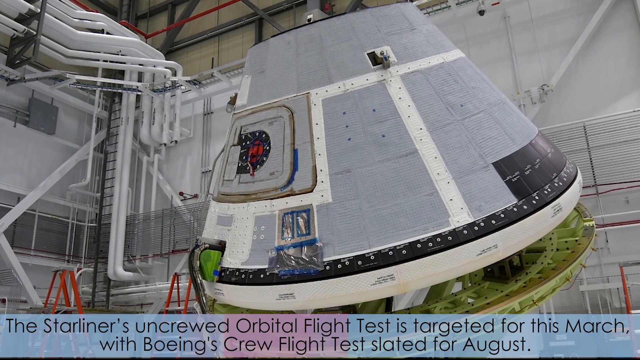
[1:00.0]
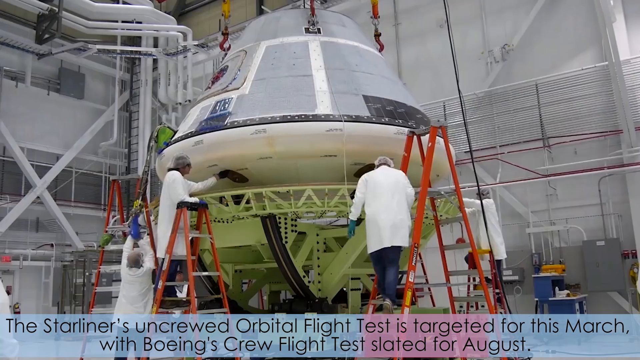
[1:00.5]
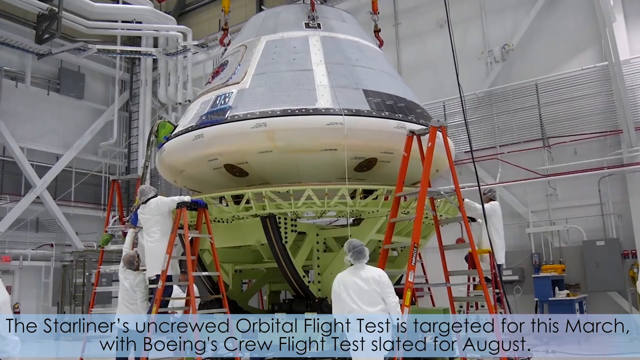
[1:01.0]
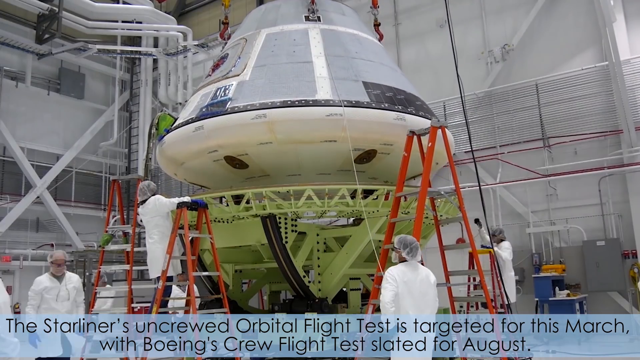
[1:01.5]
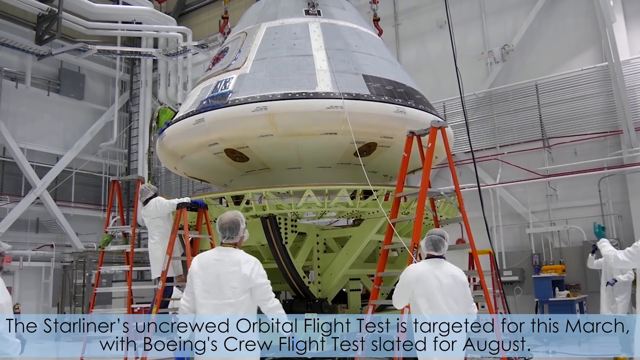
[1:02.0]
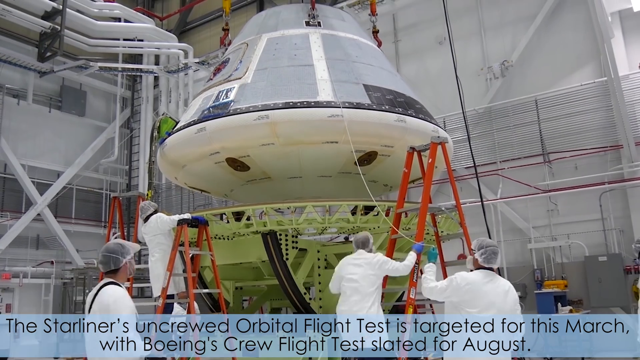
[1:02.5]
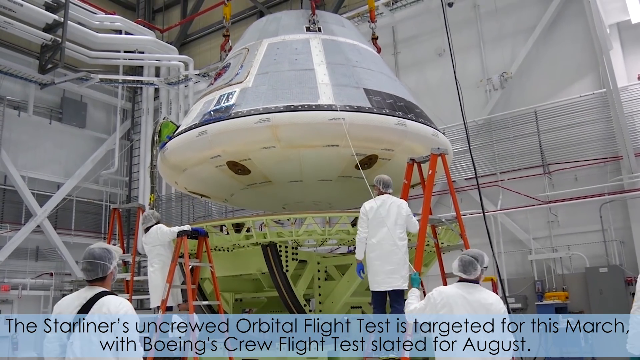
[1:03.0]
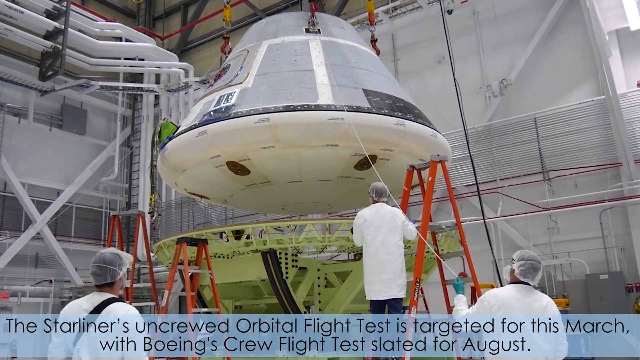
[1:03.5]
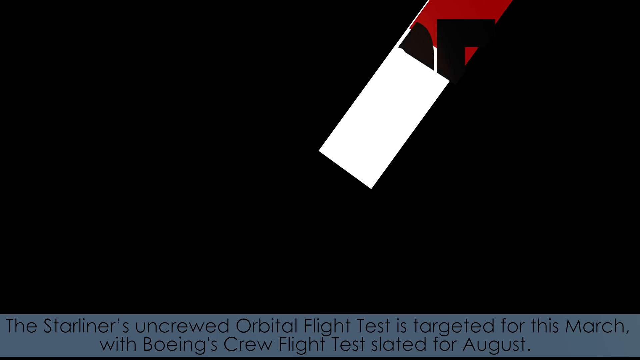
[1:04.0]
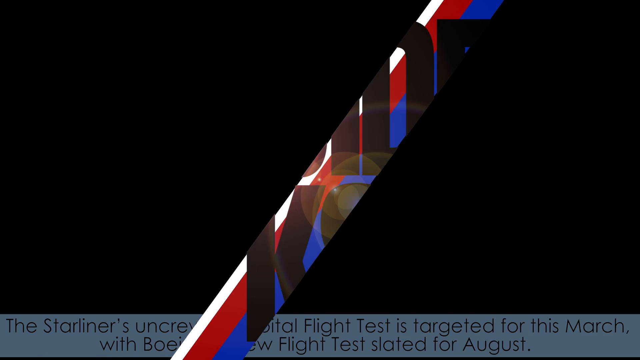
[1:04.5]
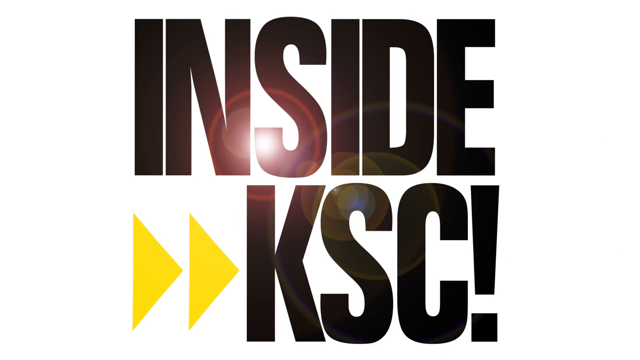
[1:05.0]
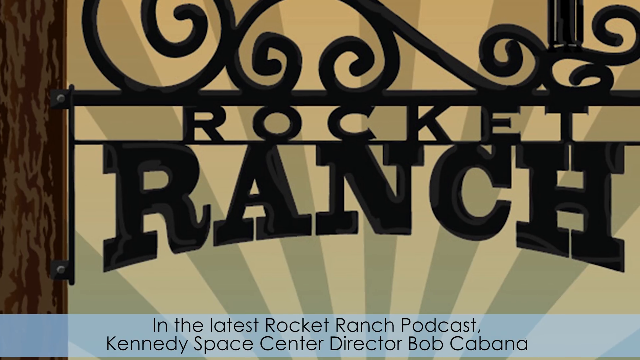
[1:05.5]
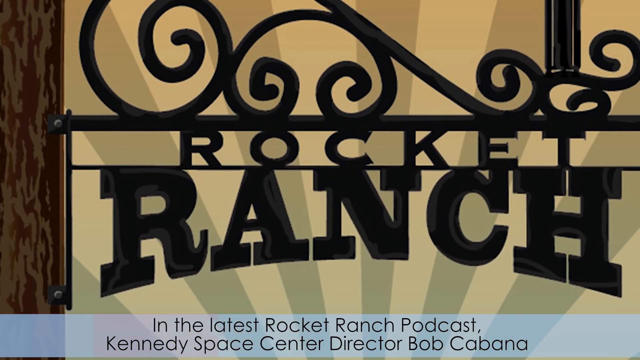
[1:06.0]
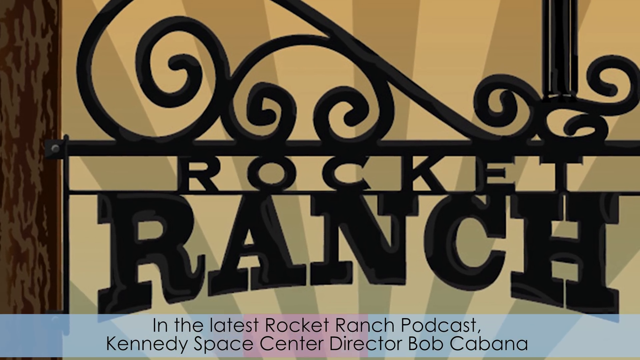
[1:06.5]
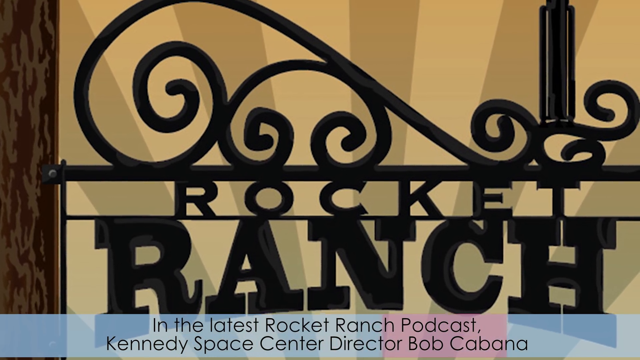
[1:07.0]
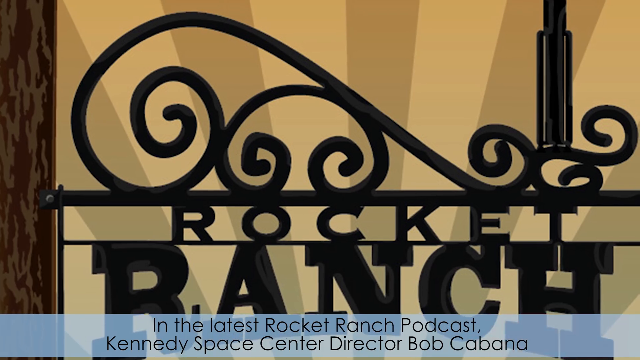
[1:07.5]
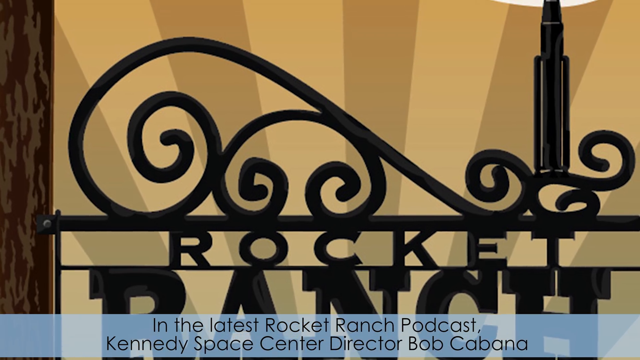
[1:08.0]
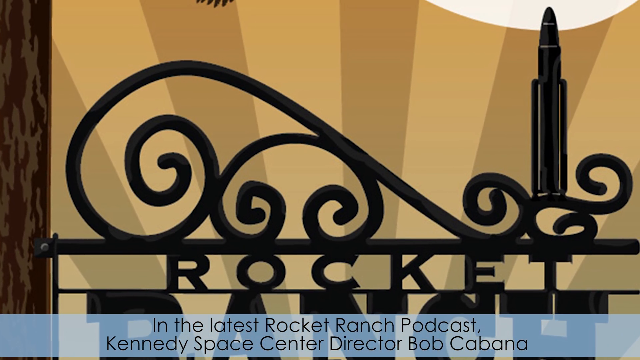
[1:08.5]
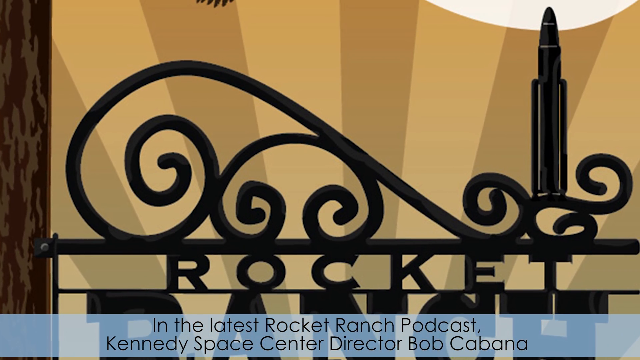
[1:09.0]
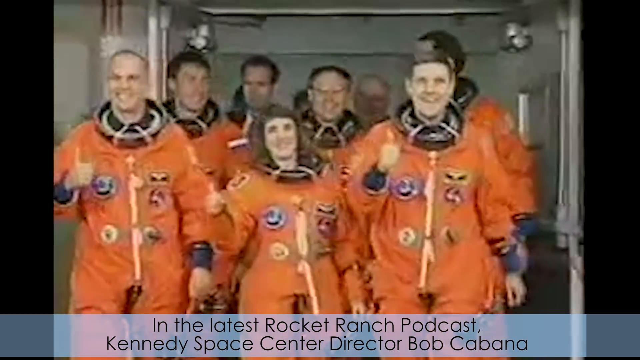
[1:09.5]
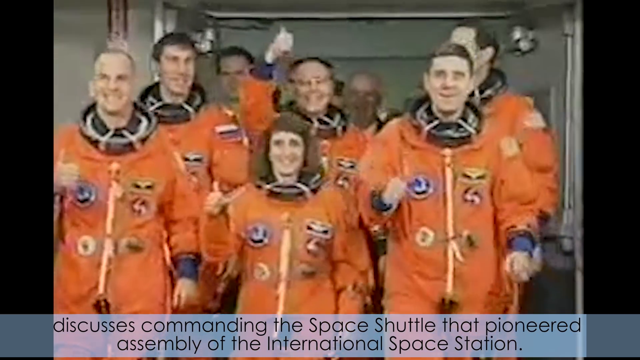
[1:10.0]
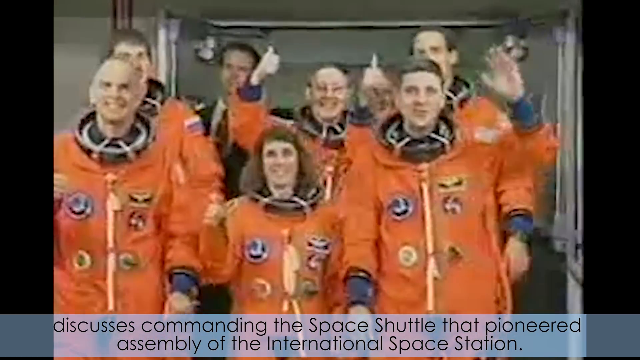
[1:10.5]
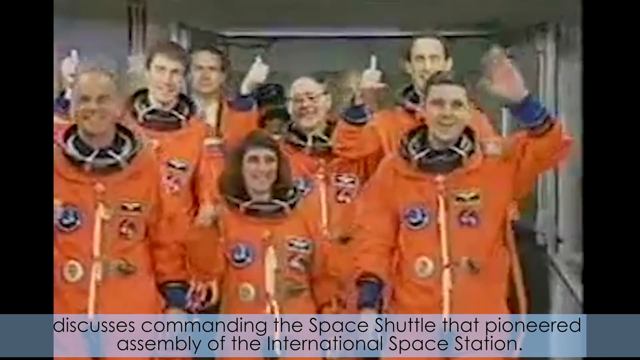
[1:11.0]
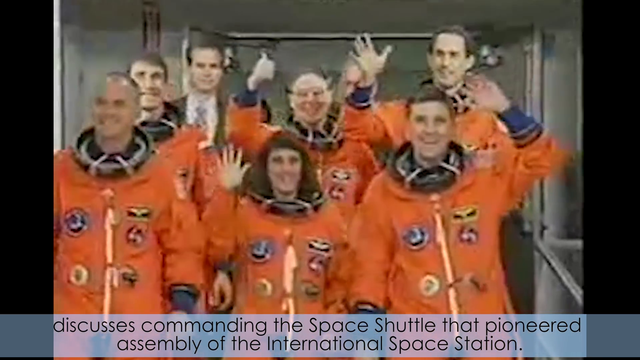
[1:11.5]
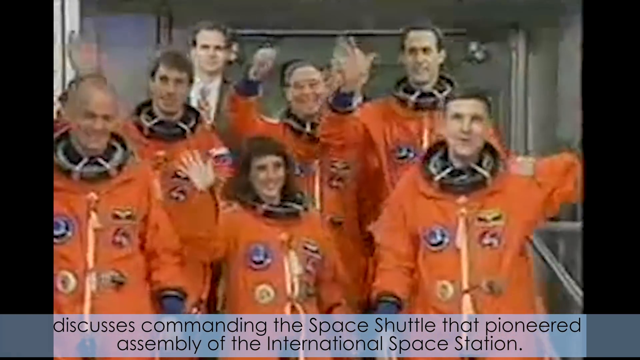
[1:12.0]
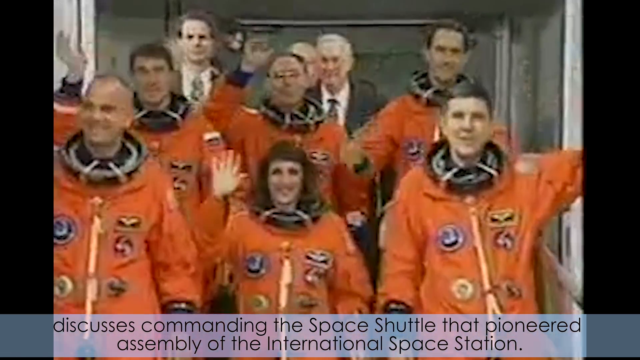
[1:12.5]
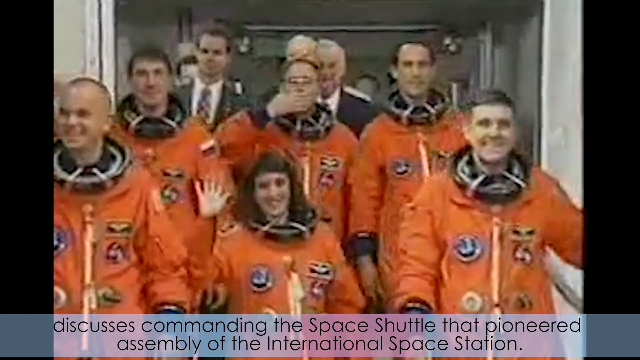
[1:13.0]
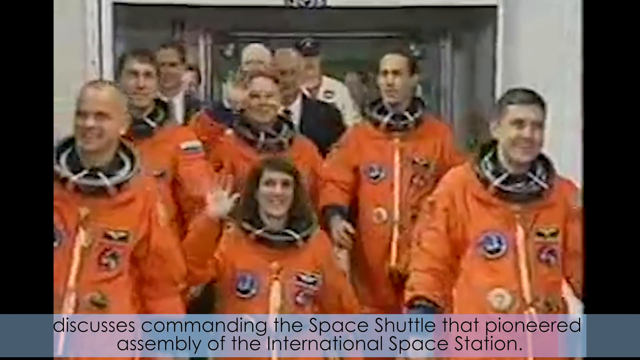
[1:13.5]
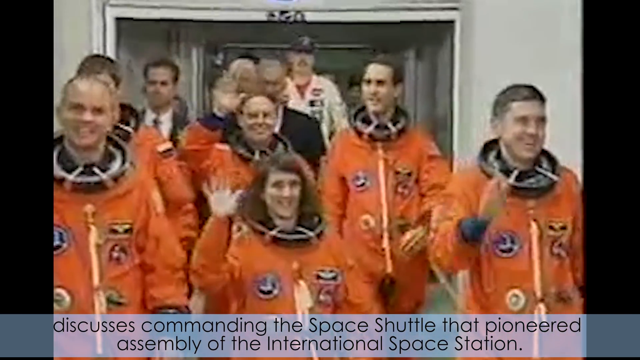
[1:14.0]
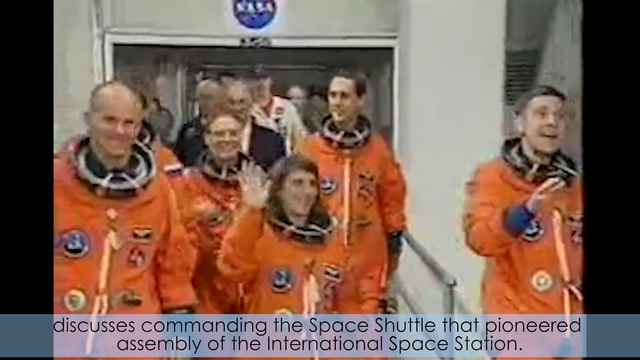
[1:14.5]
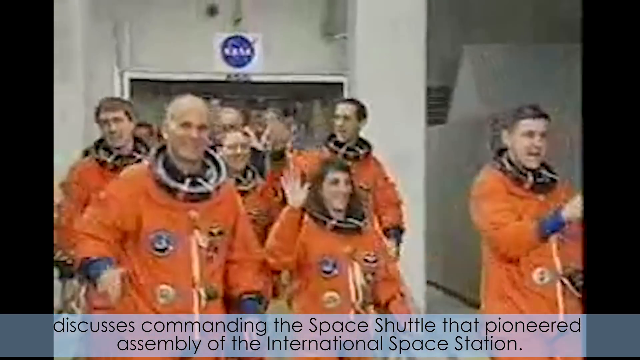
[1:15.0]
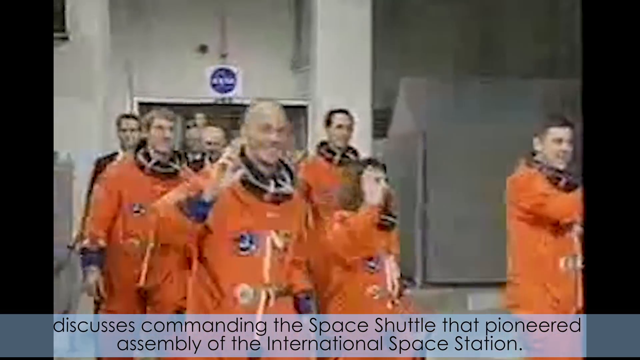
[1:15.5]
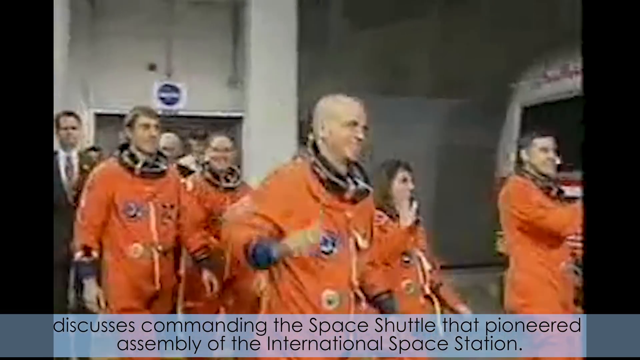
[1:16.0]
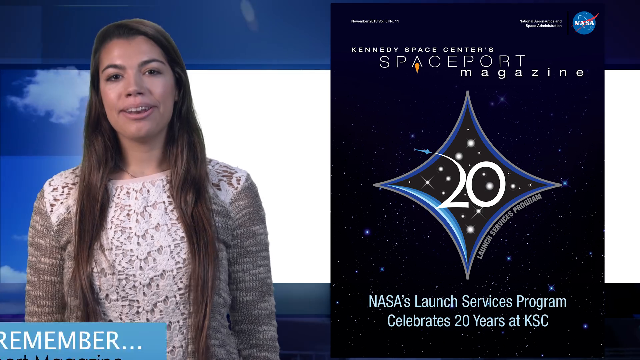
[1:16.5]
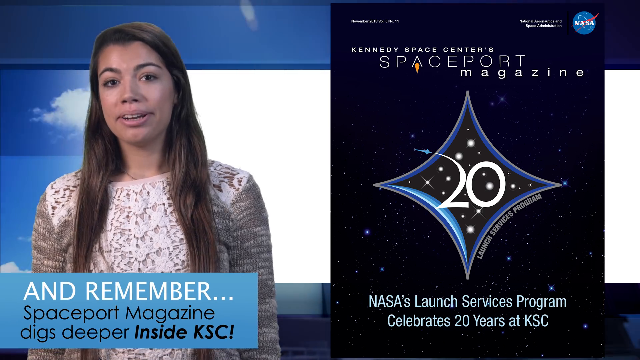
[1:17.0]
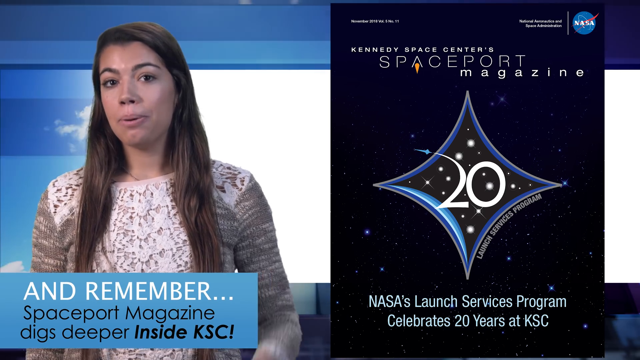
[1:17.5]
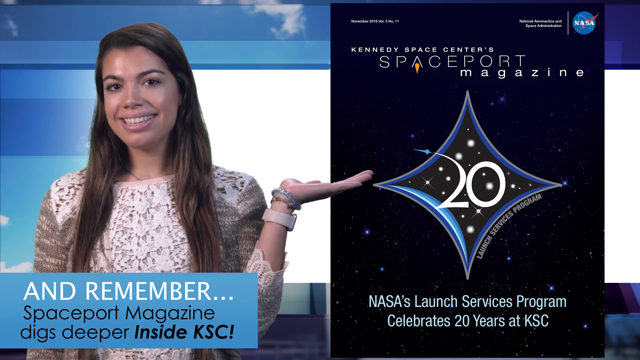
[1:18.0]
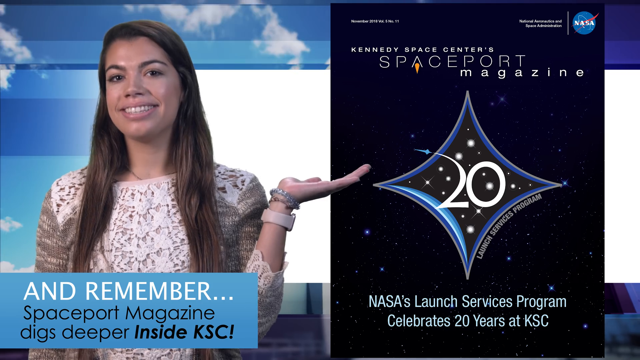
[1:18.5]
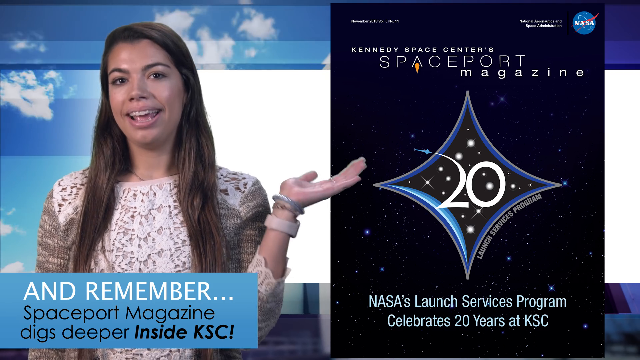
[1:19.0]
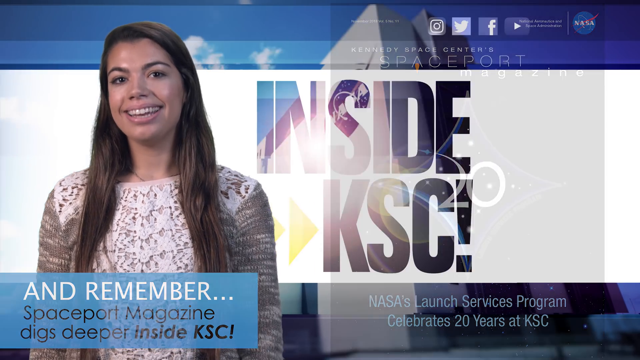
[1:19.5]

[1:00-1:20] A light gray background at the bottom reads in black font "the Starliners uncrewed orbital flight test is targeted for this March, with Boeing's crew flight tests slated for August." The gray capsule has white lining around the top end, a white base, and a black rim around the outer edges at the bottom. A grayish factory with white piping is visible up to the top left. In sped-up footage, scientists in white lab coats go up and down orange ladders as the white and gray capsule is raised off its green base, with white cords visible. The screen then goes white with black font in the center saying "inside KSC" and two yellow arrows pointing at the K. Next, a grayish banner at the bottom reads in black font "in the latest Rocket Ranch podcast, Kennedy Space Center Director Bob Cabana", and black font in the center says "Rocket Ranch", with some black rounded pieces over the top and beige and green lines going upwards behind it. The bottom text changes to "discusses commanding the space shuttle that pioneered assembly of International Space Station." About six astronauts, five men and one woman in the middle, in green flight suits with black rims around their necks, come out giving a thumbs up and waving to the cameras as they walk forward, with a number of people in suits in the background. The white woman with long brown hair in the white crocheted long-sleeved top is then on the left side, with a blue box underneath with white and black font, including "Spaceport Magazine digs deeper inside KSC". Behind her is a white and blue background. To the right is a black area with white font reading "Kennedy Space Center Spaceport Magazine". The top right has the NASA logo, a blue circle with white lettering "NASA" and a red swish going off the S. In the center is a blue-outlined star with a white number 20, on a background of black and white stars. At the bottom it reads "NASA's Launch Services Program, celebrate 20 years at KSC", and where the star curves, white lettering on the right reads "Launch Services Program". She uses her left hand to indicate the image to her left. The background then goes white and says "KSC".